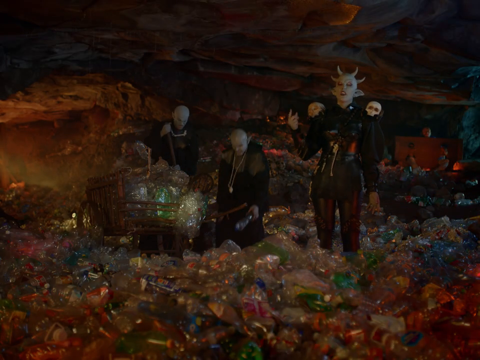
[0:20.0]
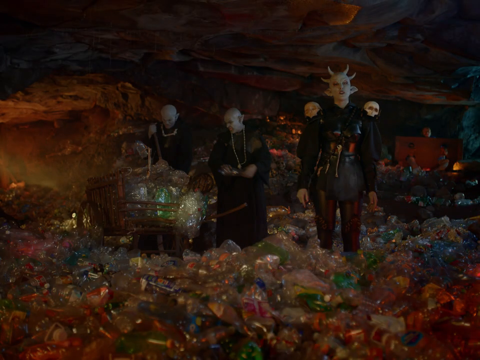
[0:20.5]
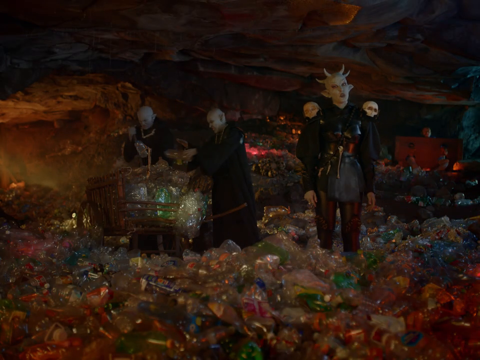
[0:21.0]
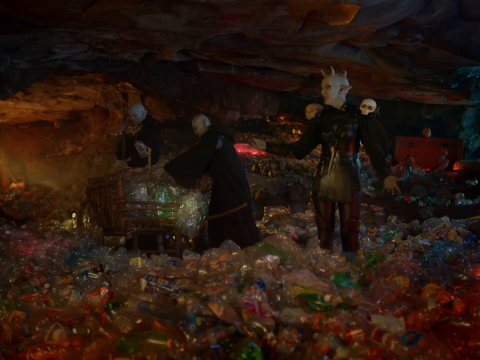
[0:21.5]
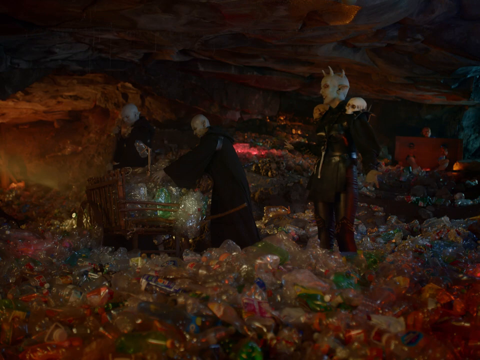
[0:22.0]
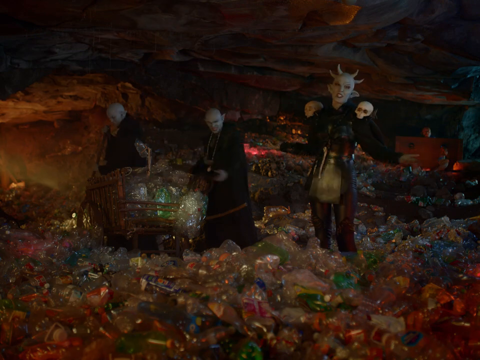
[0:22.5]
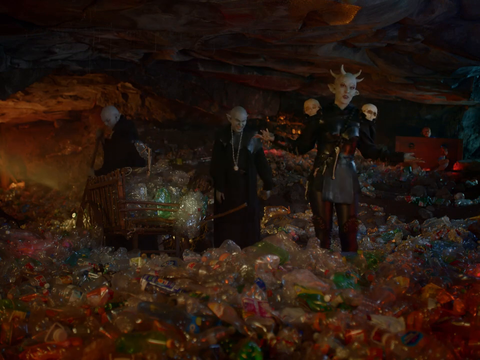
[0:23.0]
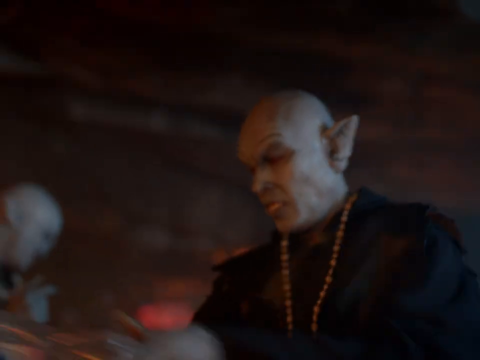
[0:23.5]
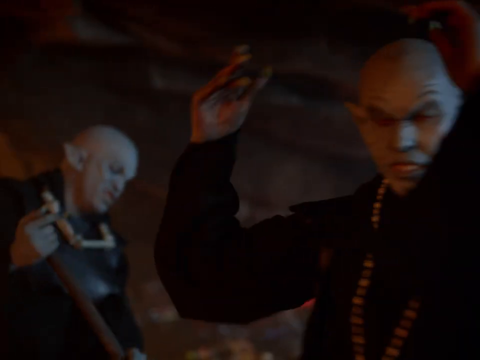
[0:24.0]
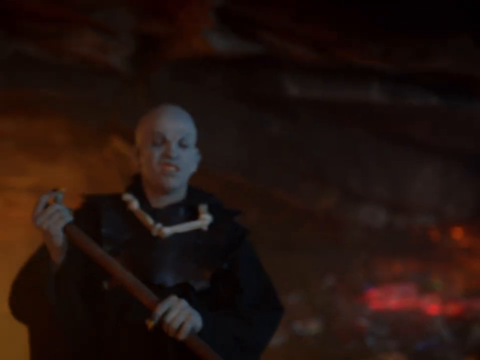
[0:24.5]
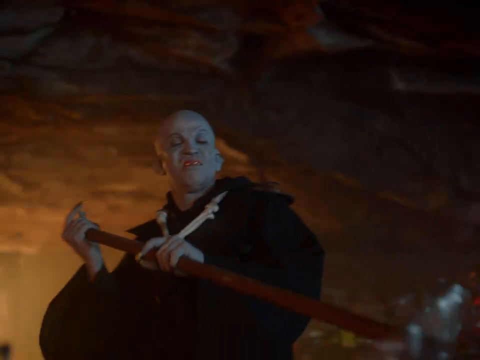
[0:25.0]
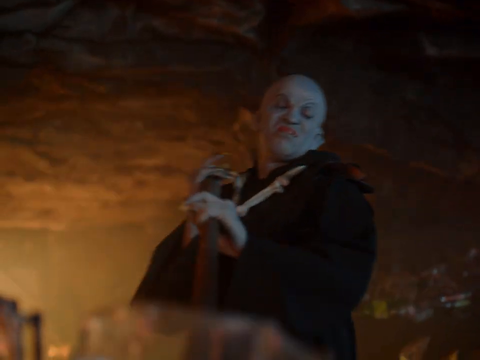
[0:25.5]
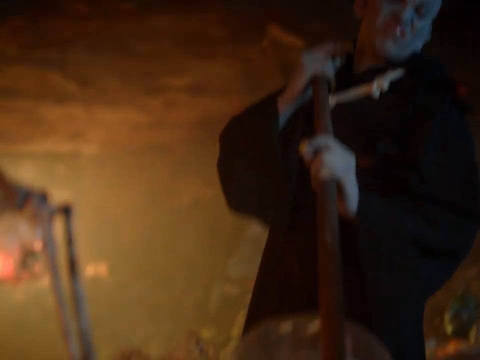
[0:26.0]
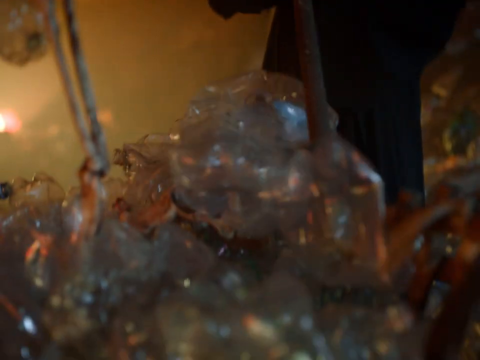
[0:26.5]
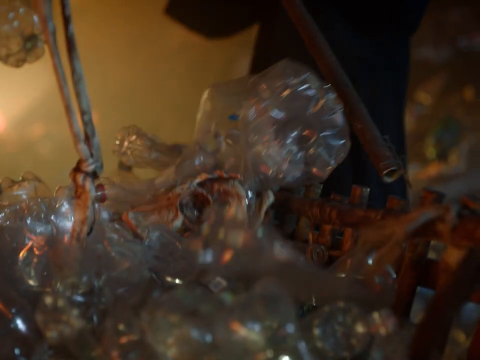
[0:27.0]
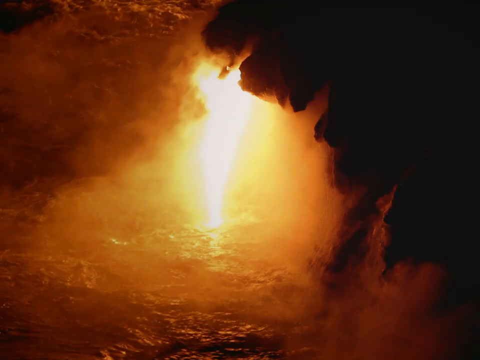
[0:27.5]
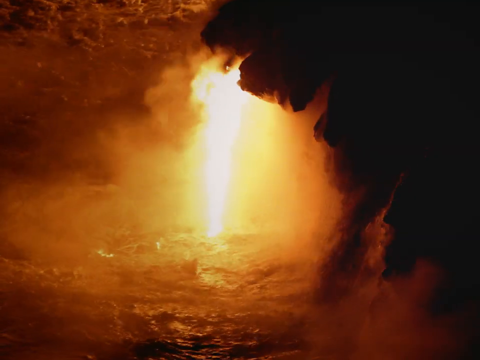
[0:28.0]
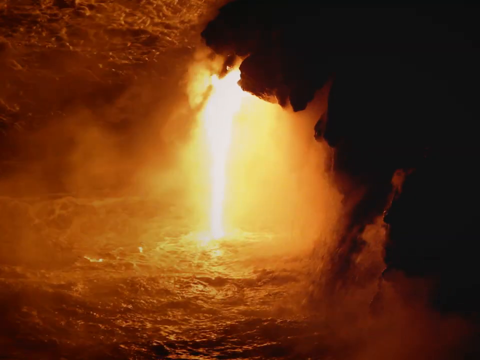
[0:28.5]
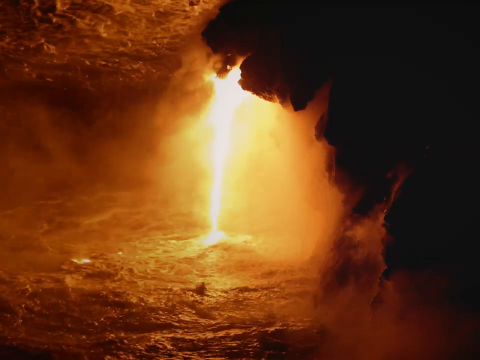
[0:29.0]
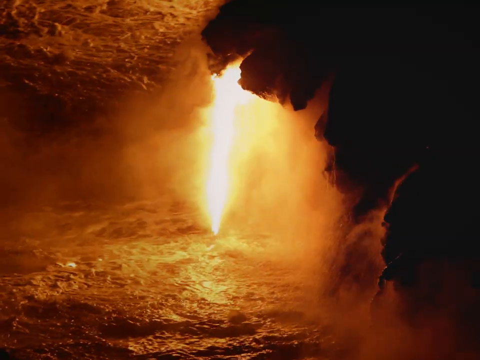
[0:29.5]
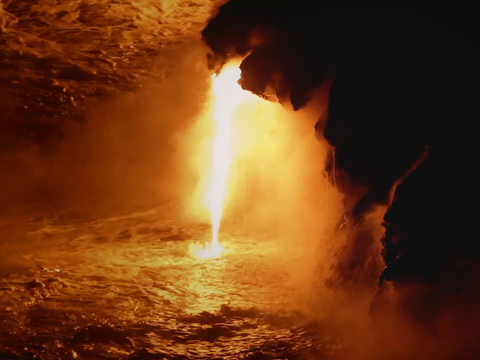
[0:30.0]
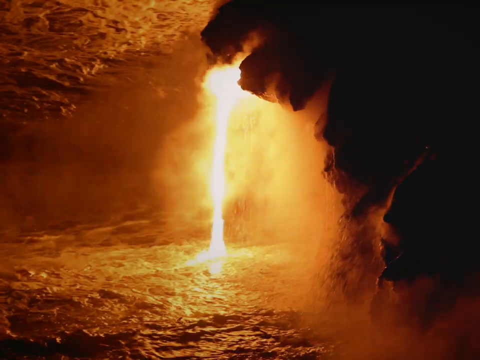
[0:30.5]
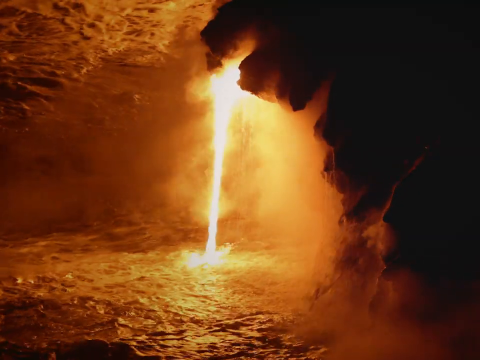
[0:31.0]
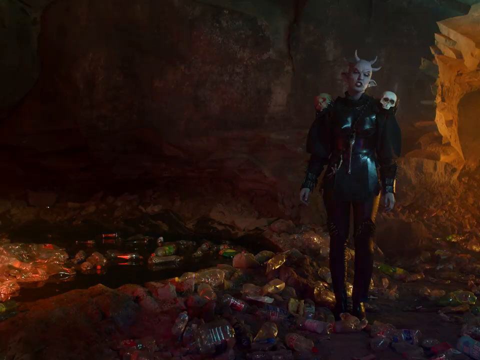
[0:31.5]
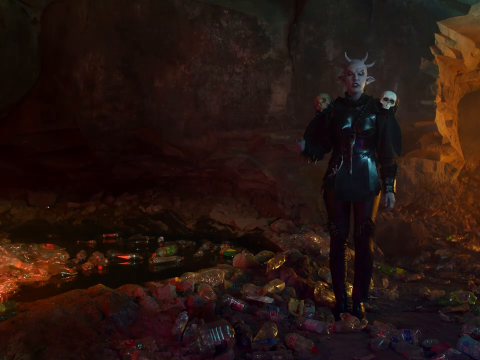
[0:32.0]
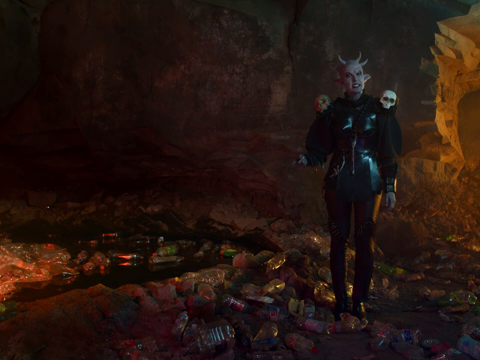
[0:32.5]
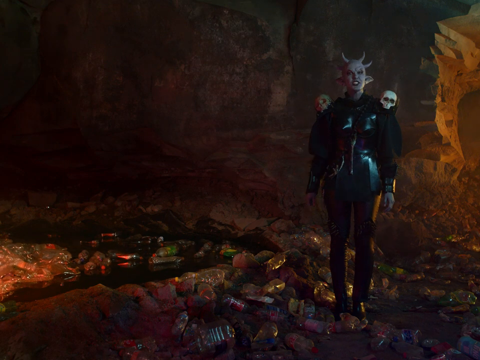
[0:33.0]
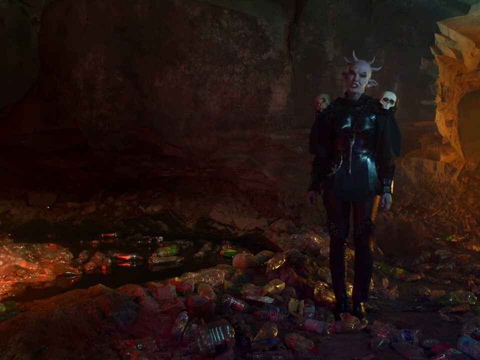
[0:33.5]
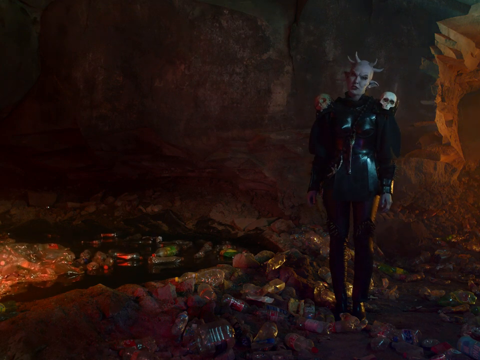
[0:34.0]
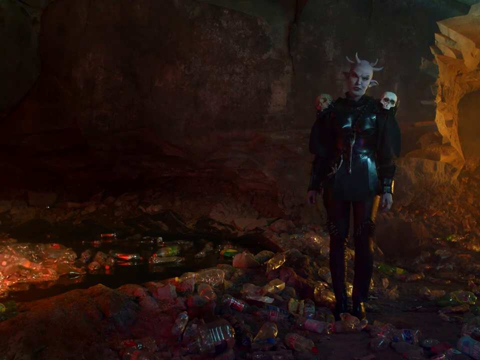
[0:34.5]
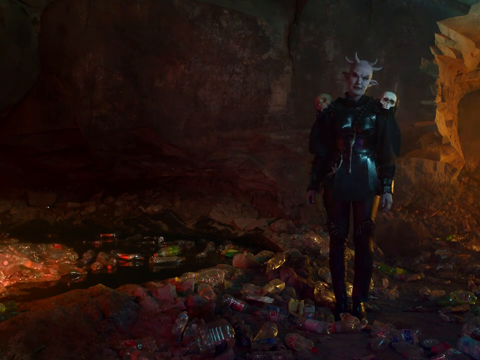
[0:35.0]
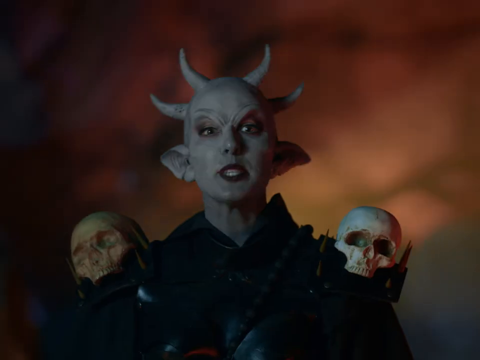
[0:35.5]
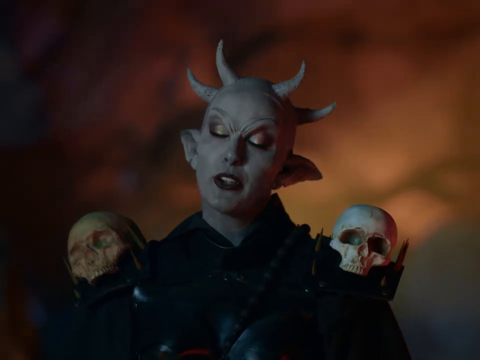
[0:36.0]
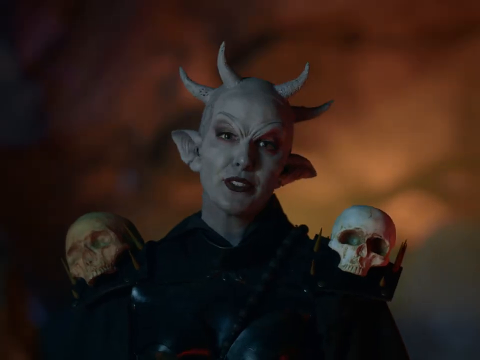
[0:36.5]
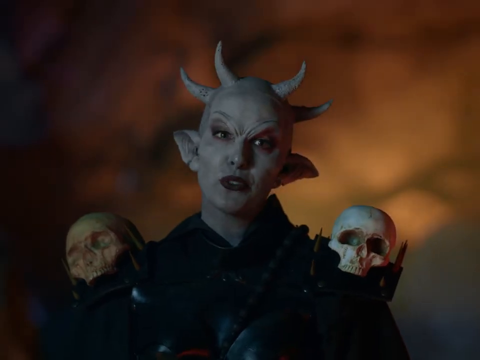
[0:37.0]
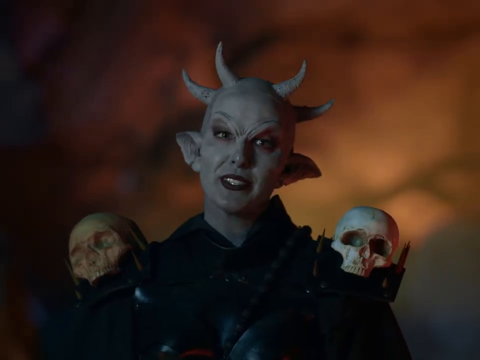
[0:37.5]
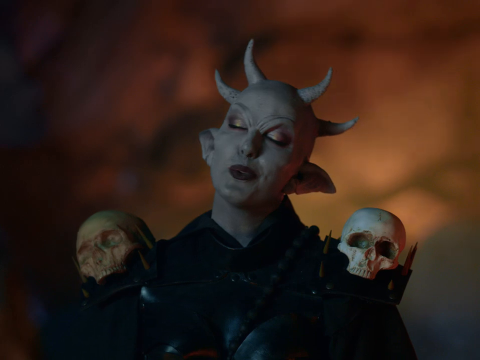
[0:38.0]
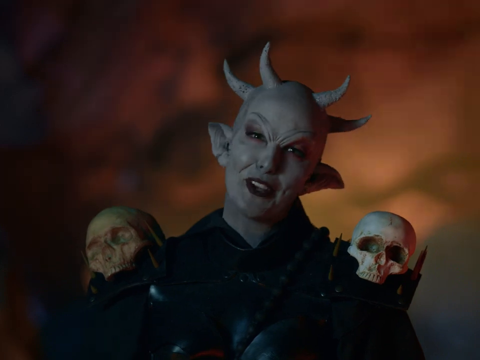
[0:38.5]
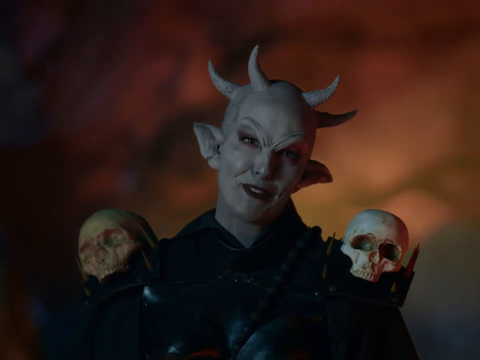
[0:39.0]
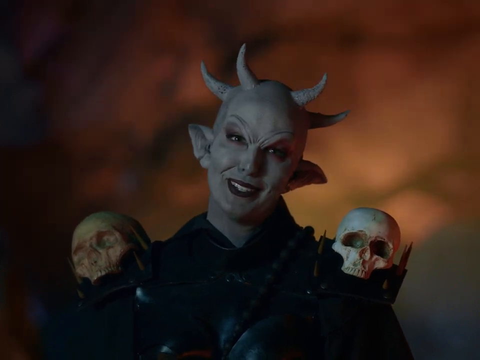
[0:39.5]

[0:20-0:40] The main alien, toward the right of the frame, temporarily holds up her right hand and possibly swings from left to right as she speaks, opening her arms with her elbows toward her body and her hands away from her body. She wears a leather outfit: the pants look to be either black or dark brown, and she wears a black skirt that reaches only to her mid-thighs. She has two skulls mounted, one on each shoulder. Her head has pointy ears that point away from her head, and she has four horns: two in the middle that curve slightly toward each other, and two below those pointing away from her head. Other creatures are visible to her right, and they really look like they are standing in garbage. The camera zooms in on the other creatures, who look like they are combing through garbage. The video then cuts to what looks like a lava pool, though apparently it is not; there is a light. Then water pours into a hole or a crevice.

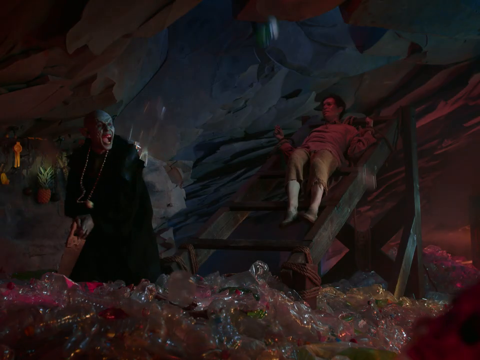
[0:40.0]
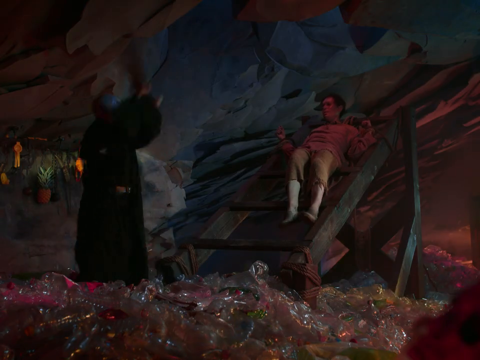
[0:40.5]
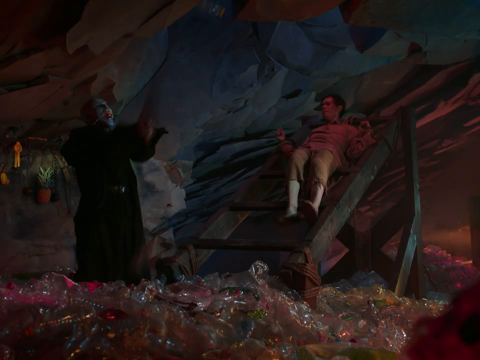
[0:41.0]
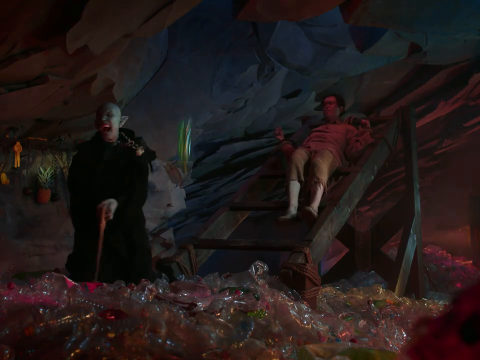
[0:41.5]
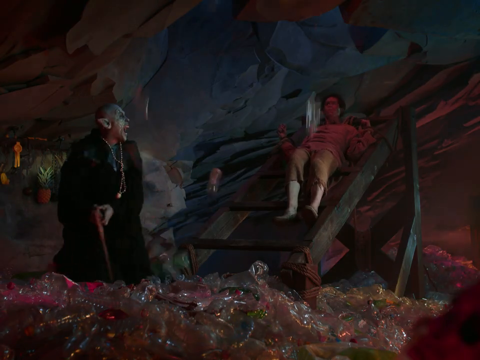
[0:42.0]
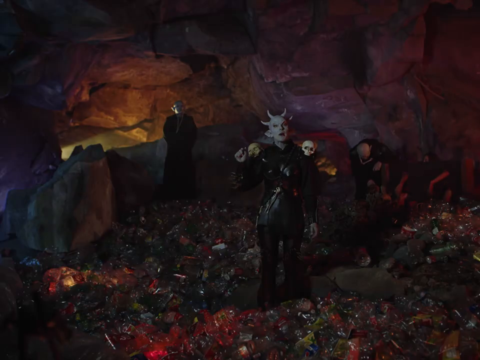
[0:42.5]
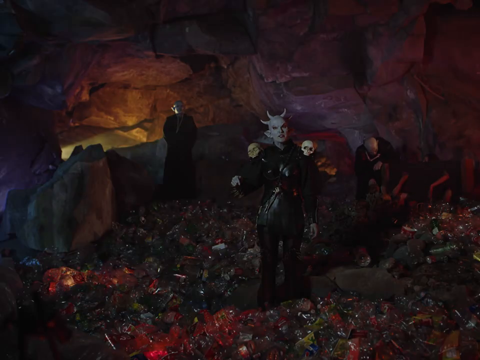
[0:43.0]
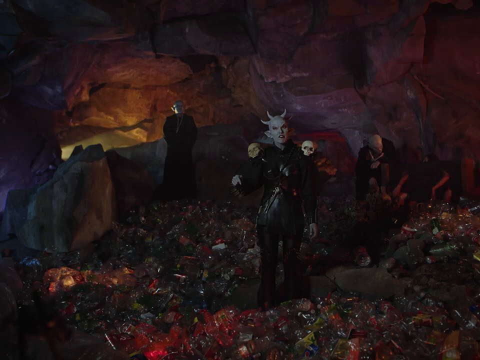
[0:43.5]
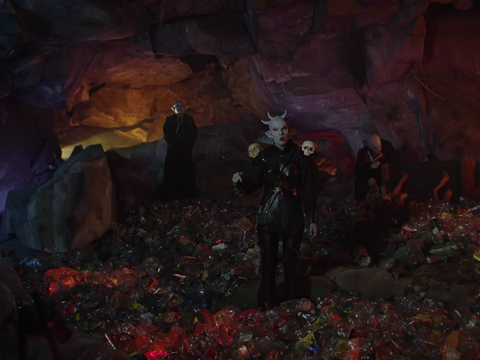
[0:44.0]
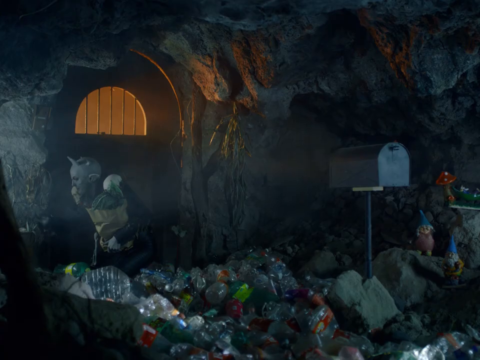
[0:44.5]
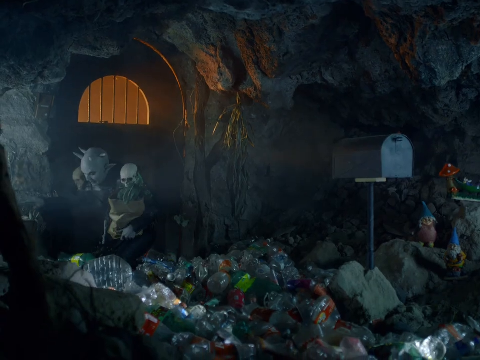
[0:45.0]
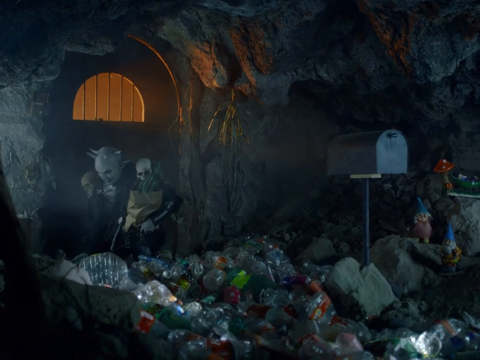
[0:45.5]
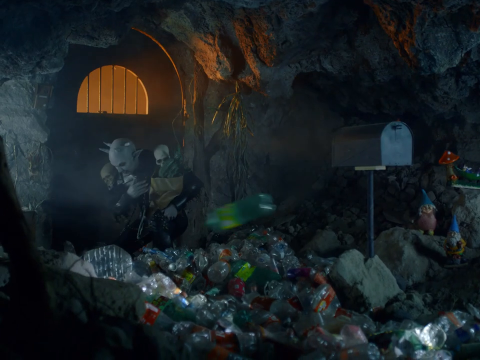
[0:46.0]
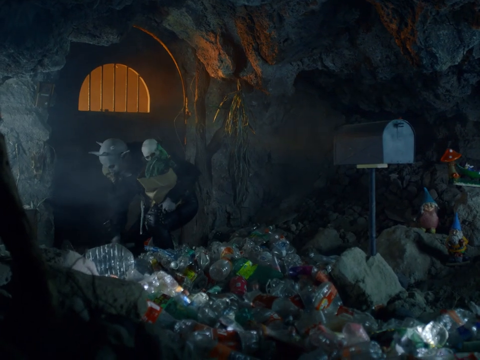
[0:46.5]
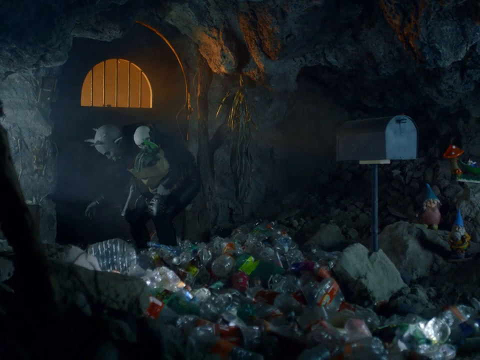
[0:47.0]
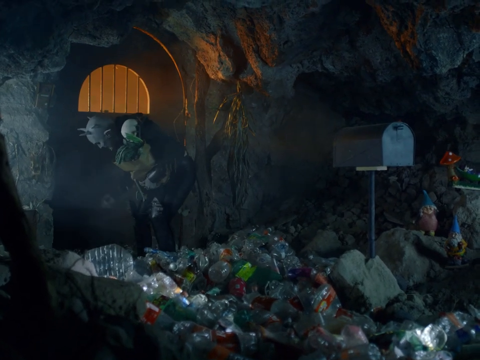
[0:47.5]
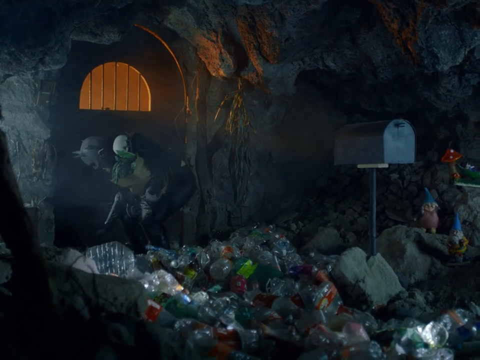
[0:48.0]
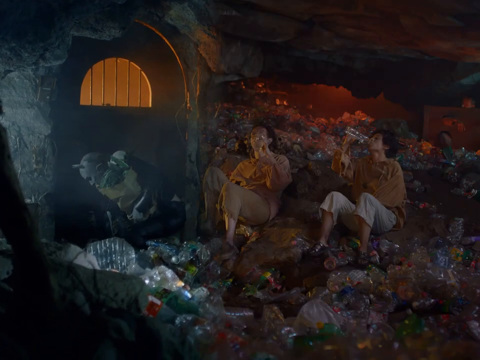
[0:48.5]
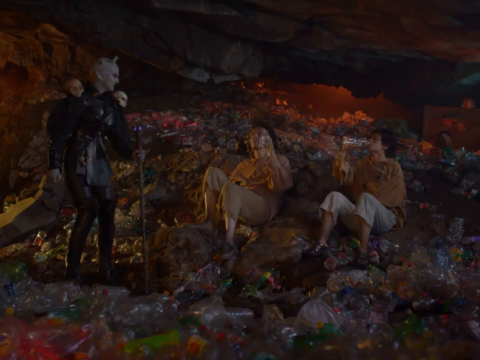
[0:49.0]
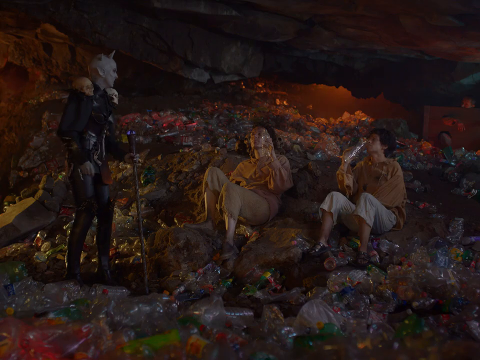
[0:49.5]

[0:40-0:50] One of the people who fell from the sky appears to be strapped to a wooden fixture that could be the bottom of a boat. It is definitely dark wood, with several big flat logs and smaller planks mounted like a stairway. The man is strapped to it with ropes around his wrists and lies on his back, looking up. One of the alien creatures is toward the left of the frame, and it looks like they are throwing some of the garbage at him. Next, one of the creatures with skulls on its shoulders is shown rummaging through the garbage, and then the creature arrives at the spot where the two people are still lying on the ground.